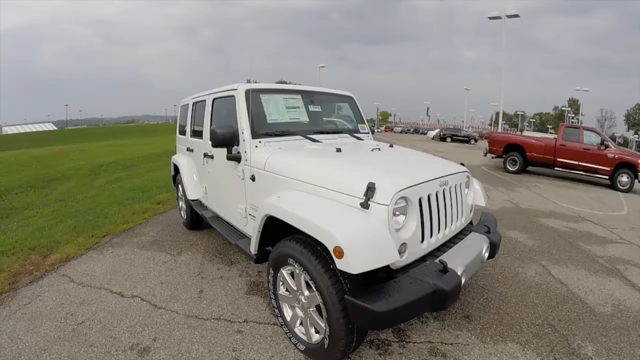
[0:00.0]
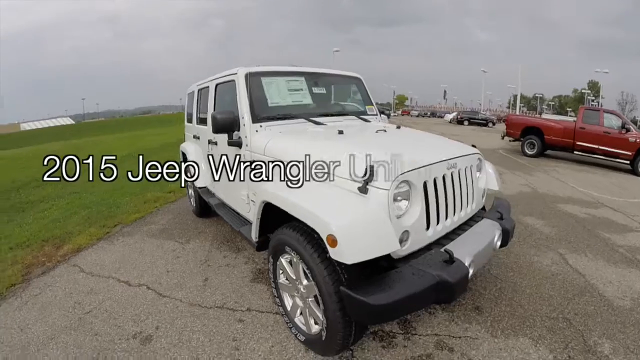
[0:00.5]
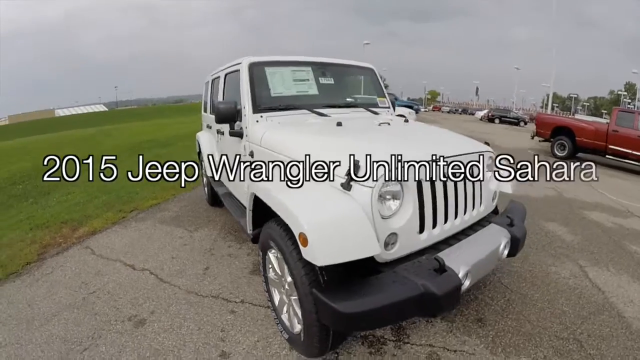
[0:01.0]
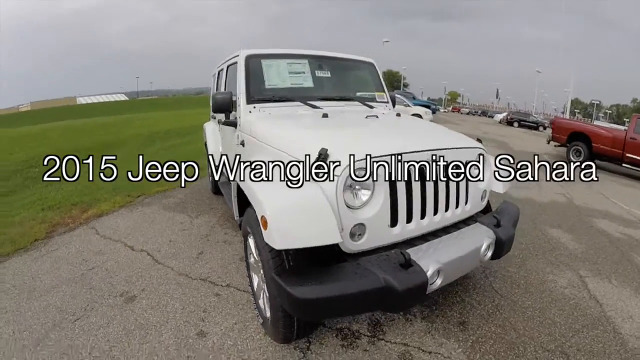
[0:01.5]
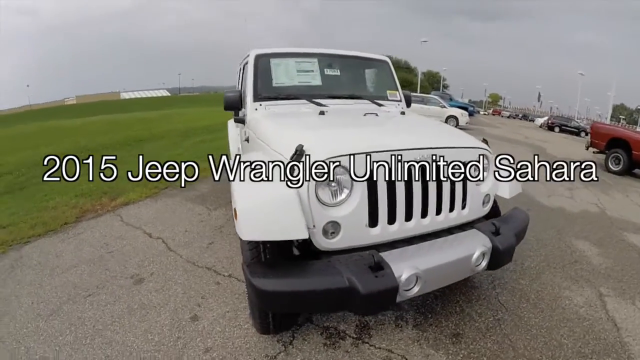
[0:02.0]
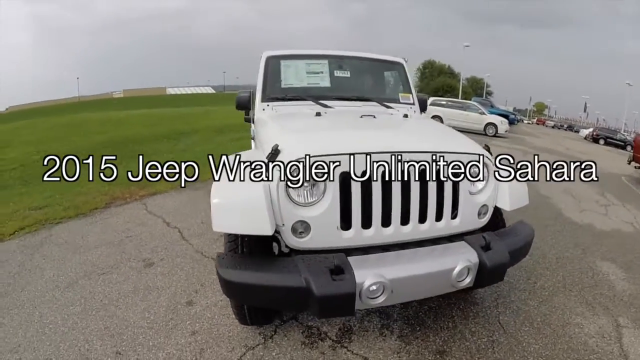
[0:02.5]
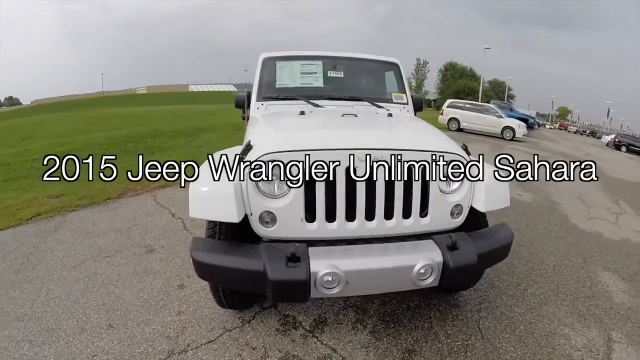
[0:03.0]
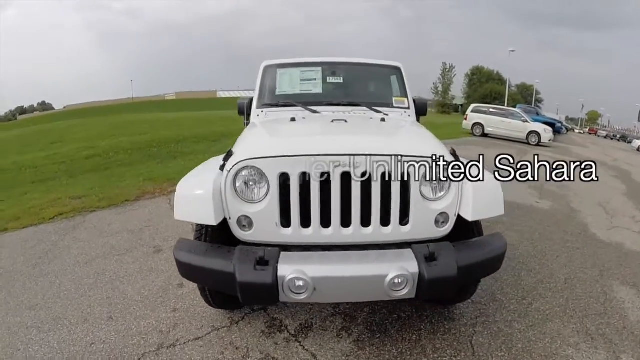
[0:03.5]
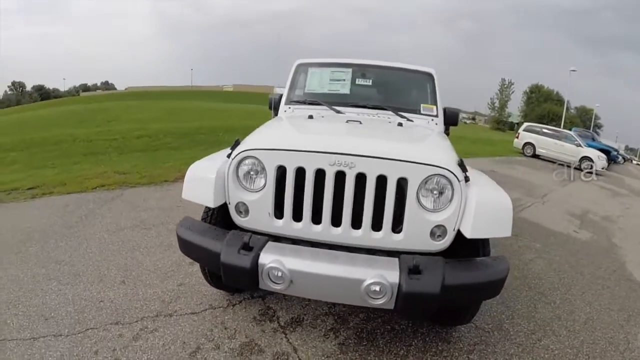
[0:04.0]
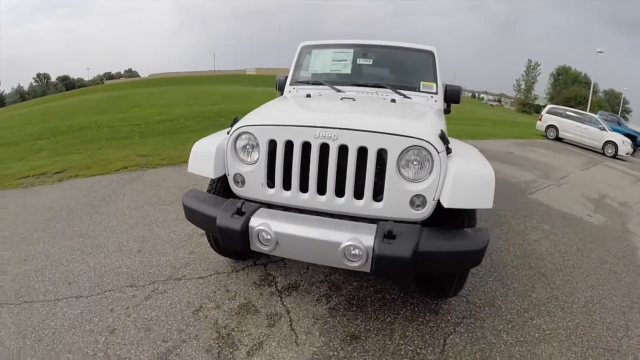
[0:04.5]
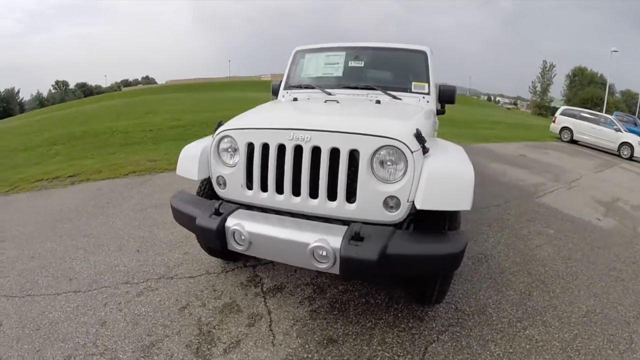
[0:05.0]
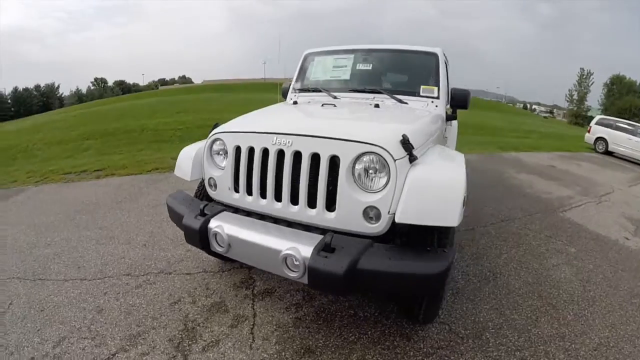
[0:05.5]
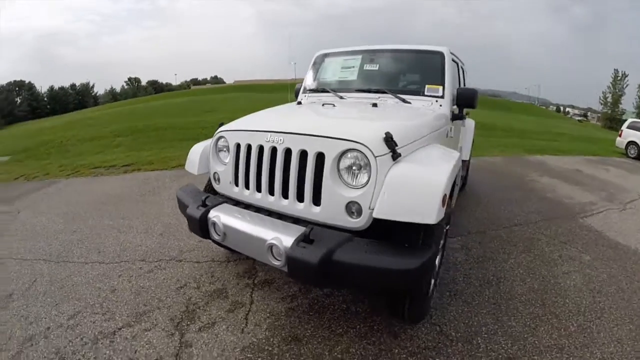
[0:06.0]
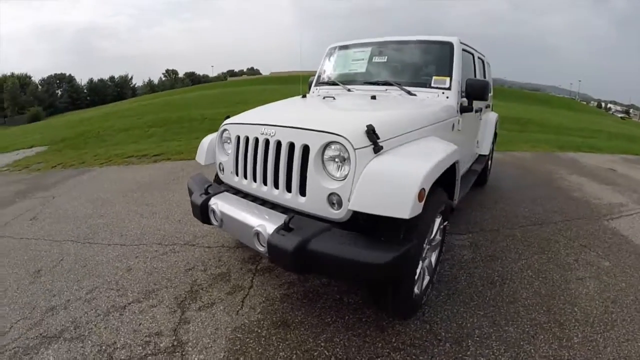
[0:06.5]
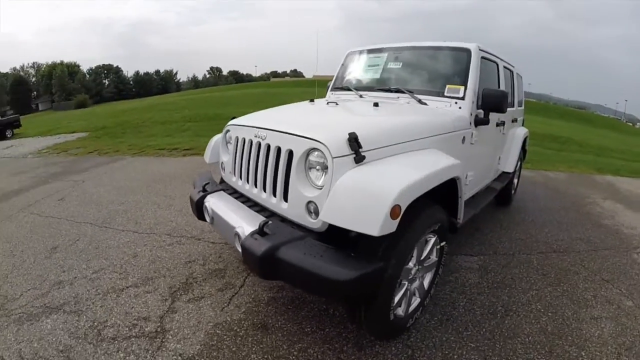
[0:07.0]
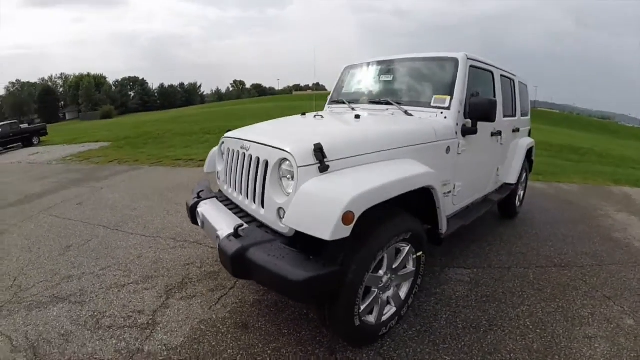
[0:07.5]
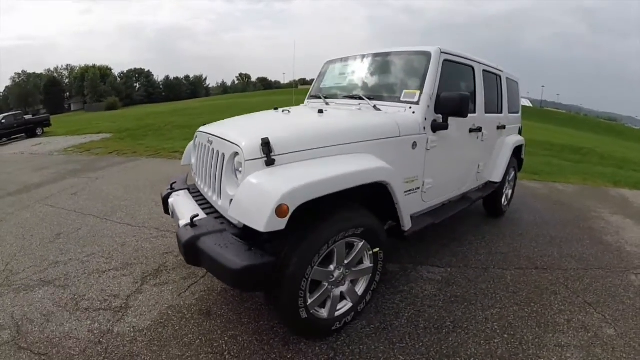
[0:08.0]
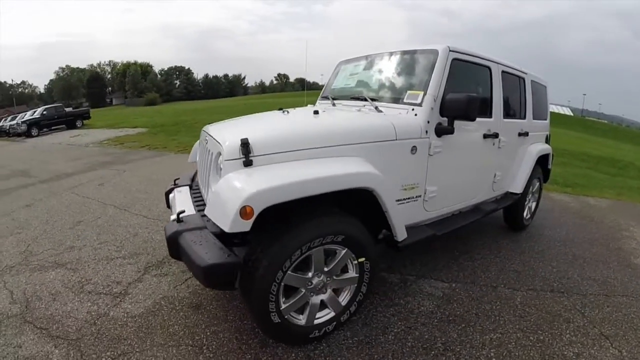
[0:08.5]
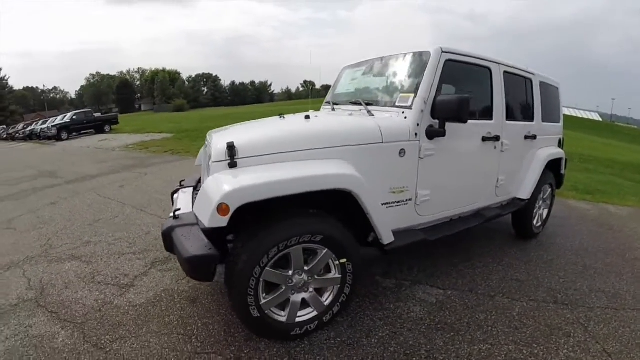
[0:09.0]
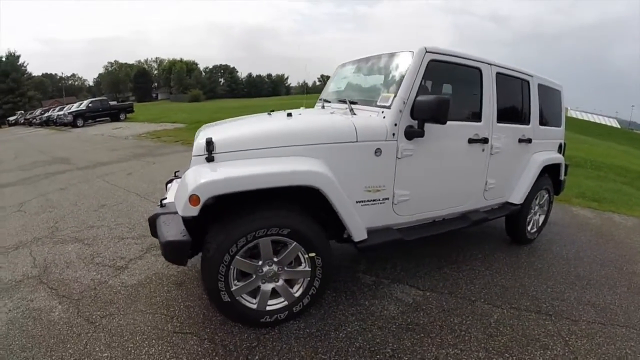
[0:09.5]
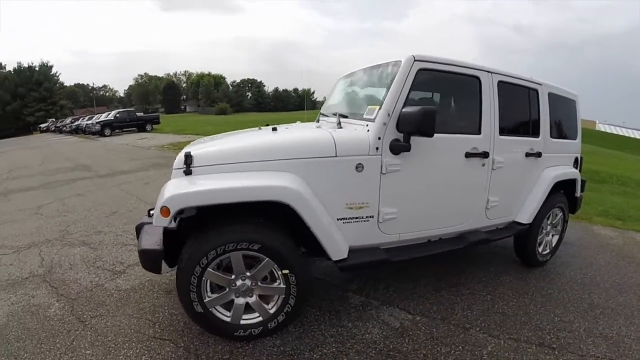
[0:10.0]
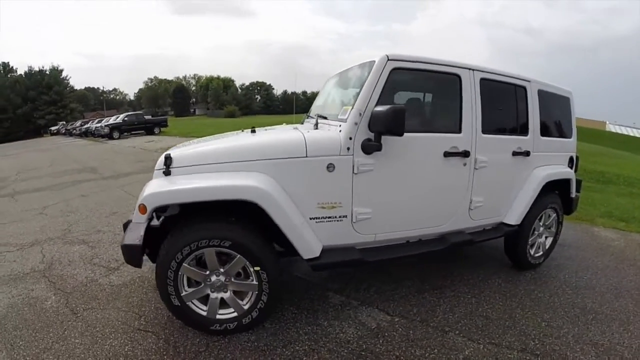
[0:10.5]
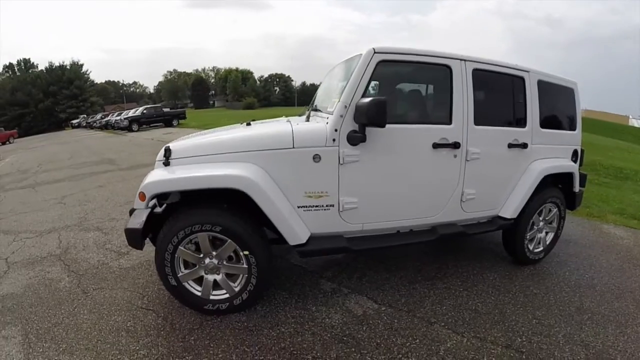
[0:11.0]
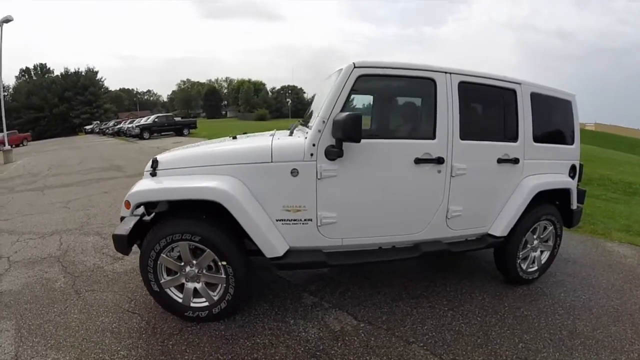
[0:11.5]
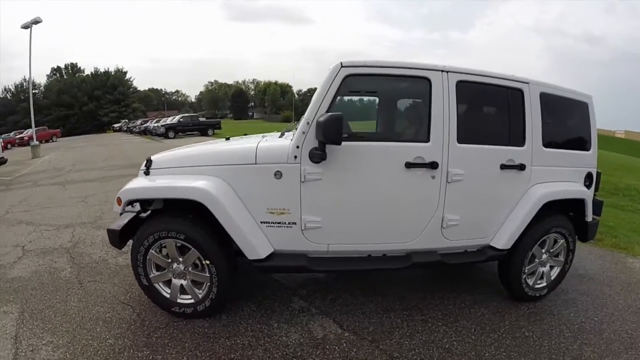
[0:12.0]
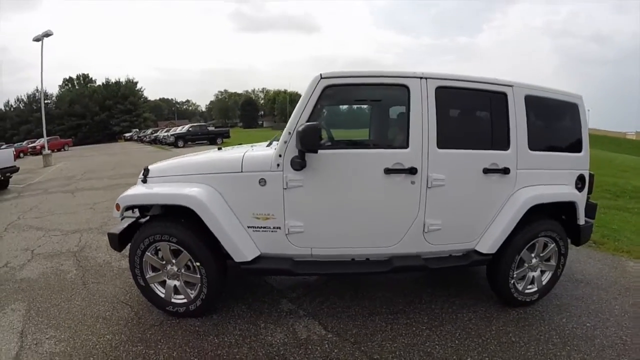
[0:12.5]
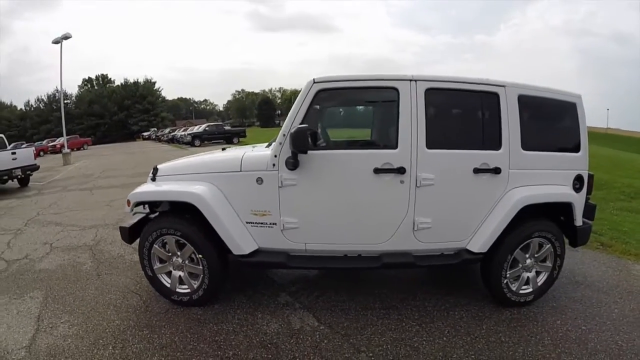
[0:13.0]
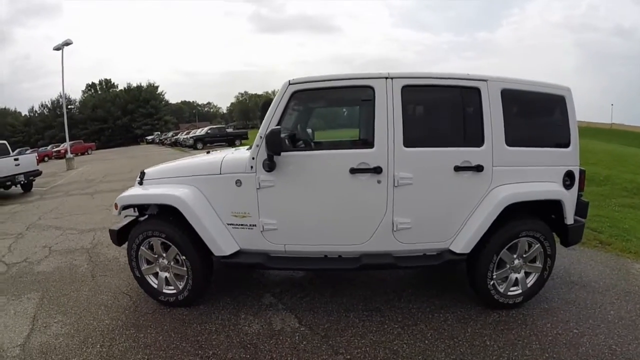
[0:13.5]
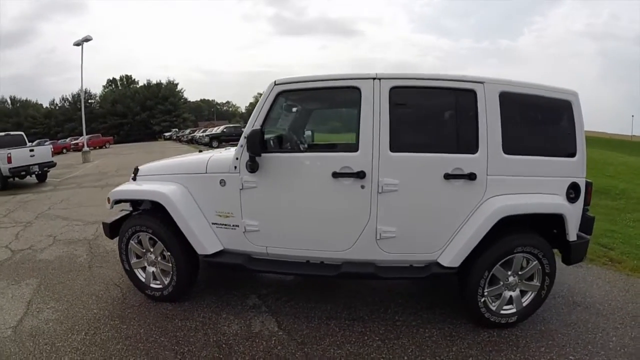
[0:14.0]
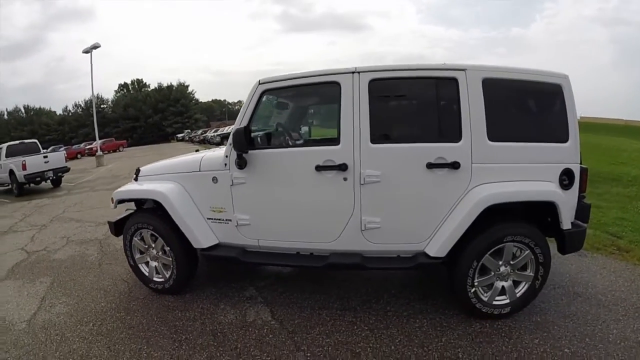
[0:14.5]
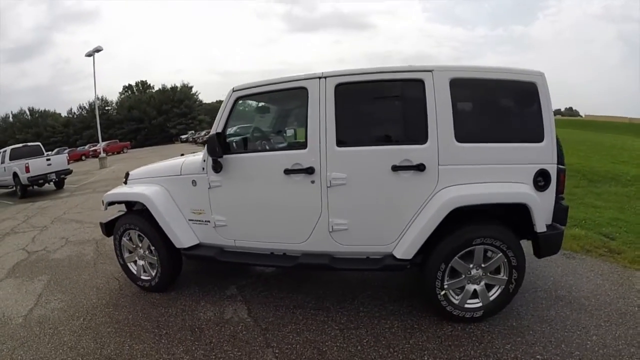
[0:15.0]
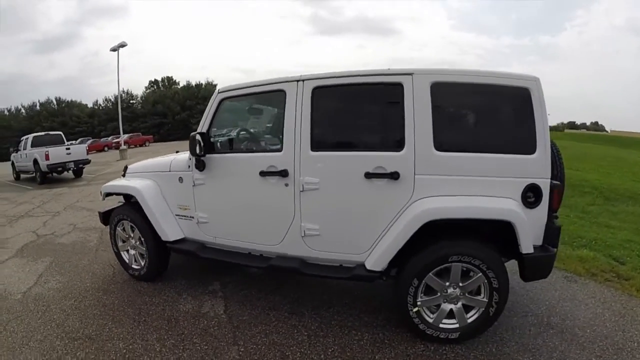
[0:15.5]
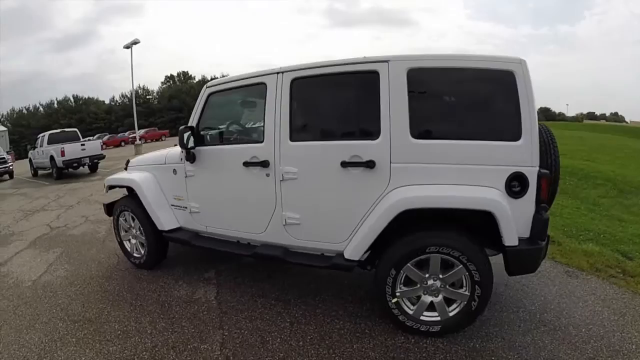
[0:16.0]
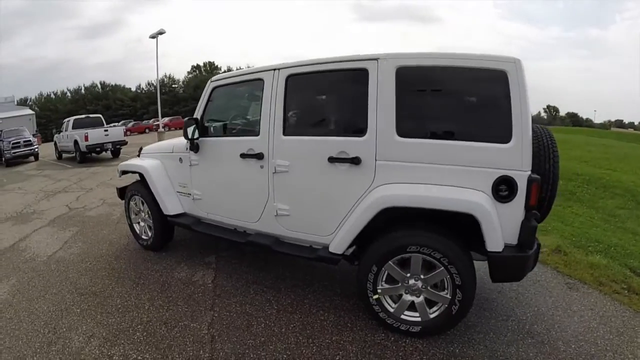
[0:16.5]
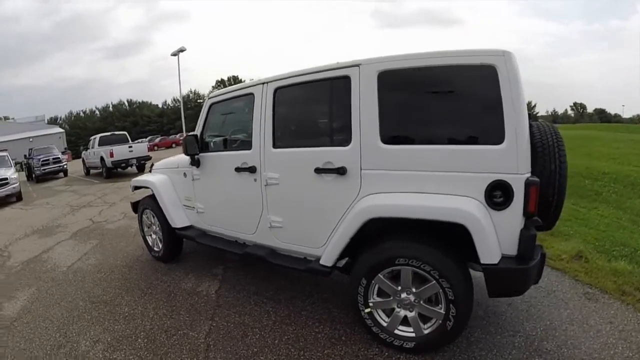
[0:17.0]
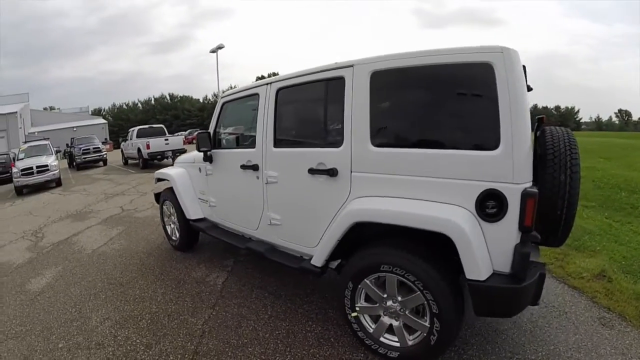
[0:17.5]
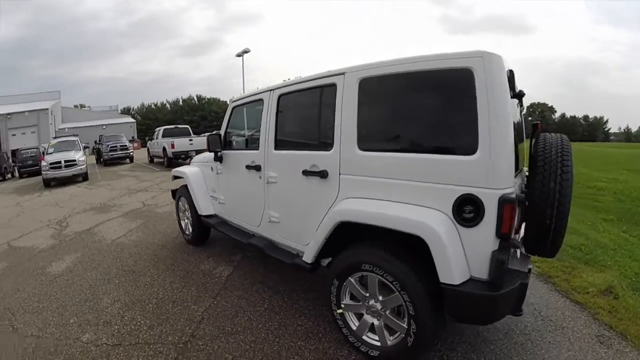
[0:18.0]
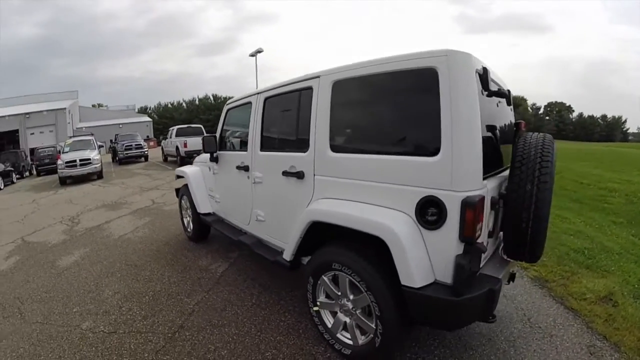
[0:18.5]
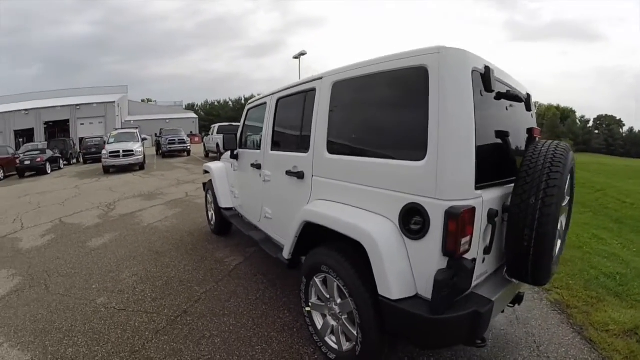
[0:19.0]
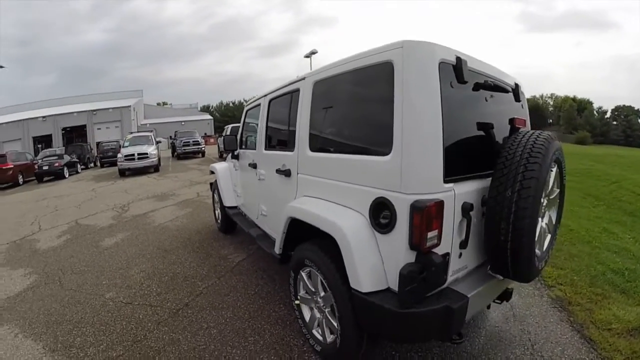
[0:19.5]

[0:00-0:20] A white Jeep, which looks like it is sitting in a lot for sale, appears with white text on the front of the picture reading "2015 Jeep Wrangler Unlimited Sahara." The camera goes around the vehicle to show its other side, then continues circling to the back. A spare tire hangs off the back. The Jeep has four doors and looks very well made. Its exterior is white, and it has what almost look like square rims around the wheels, which look interesting and unique. Information about the price and the vehicle's specifications is stuck in the window, but the details are too far away to read.